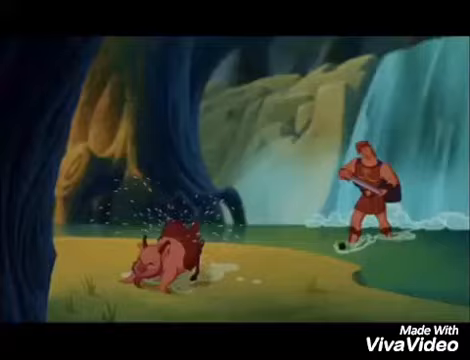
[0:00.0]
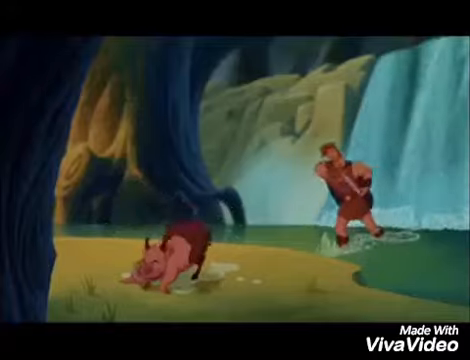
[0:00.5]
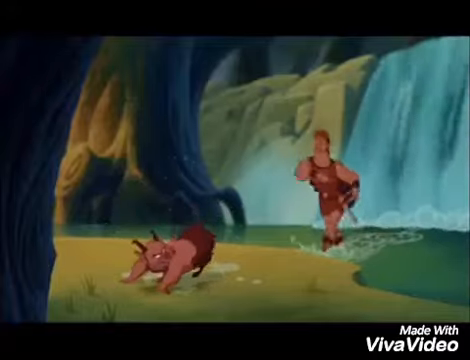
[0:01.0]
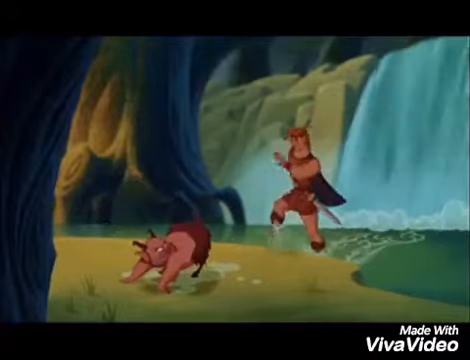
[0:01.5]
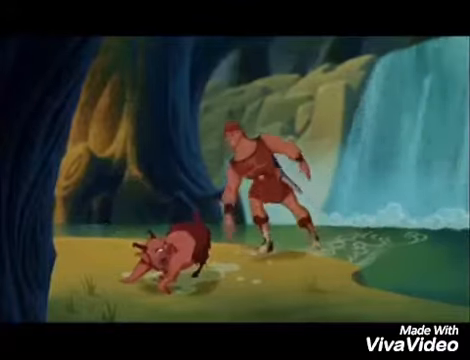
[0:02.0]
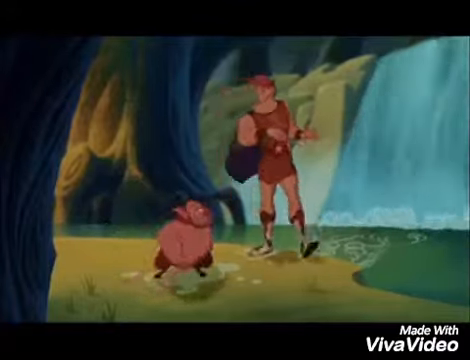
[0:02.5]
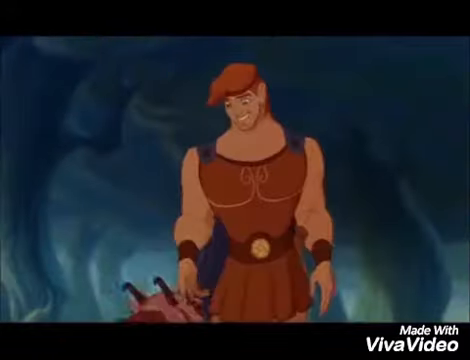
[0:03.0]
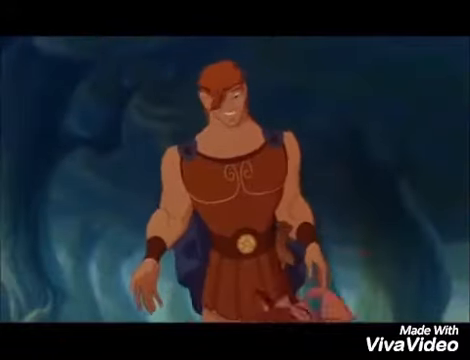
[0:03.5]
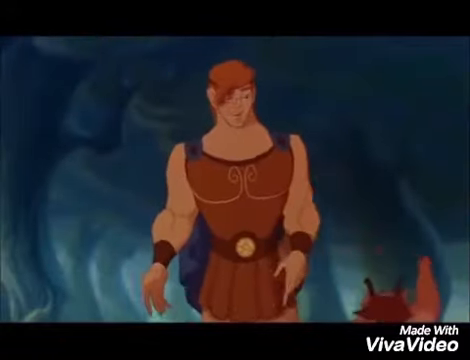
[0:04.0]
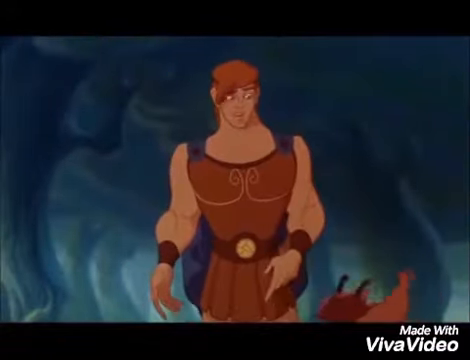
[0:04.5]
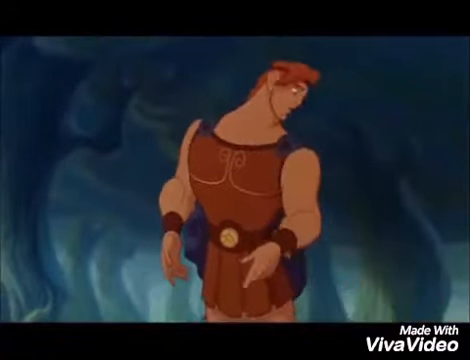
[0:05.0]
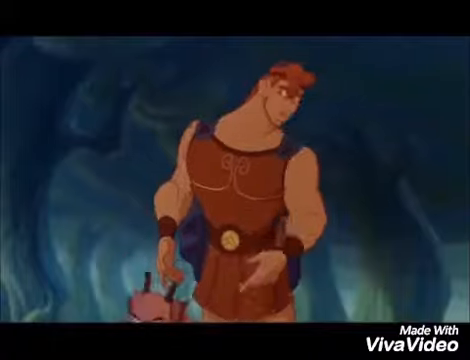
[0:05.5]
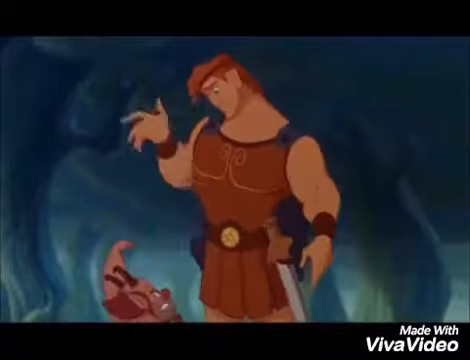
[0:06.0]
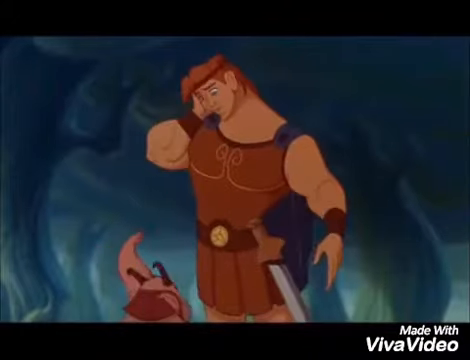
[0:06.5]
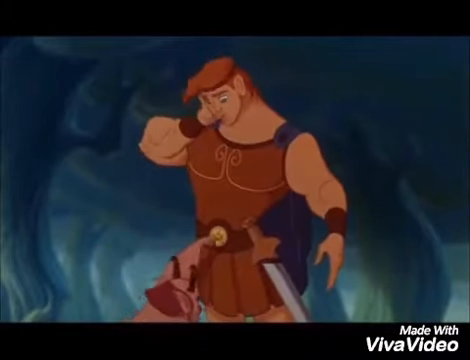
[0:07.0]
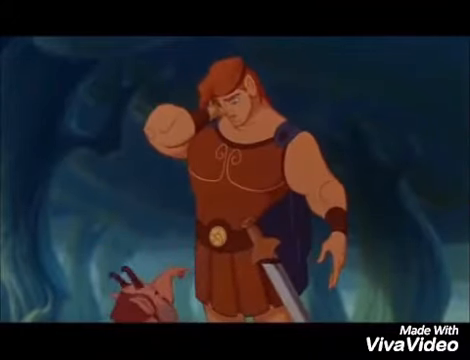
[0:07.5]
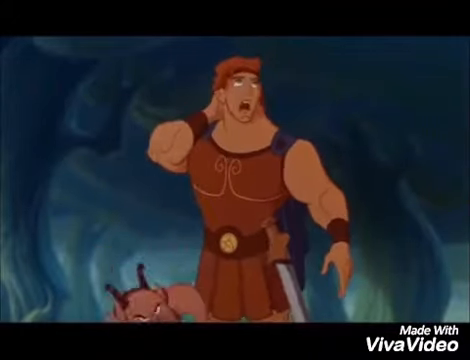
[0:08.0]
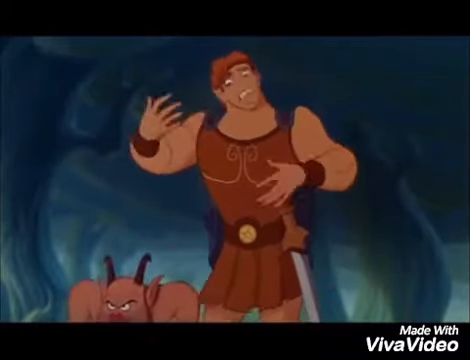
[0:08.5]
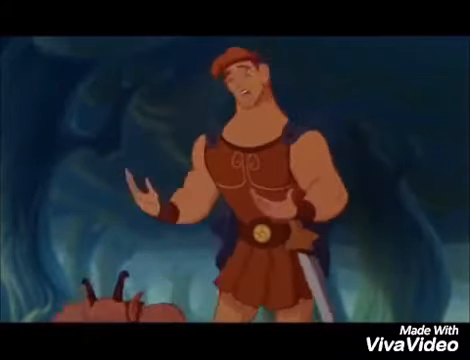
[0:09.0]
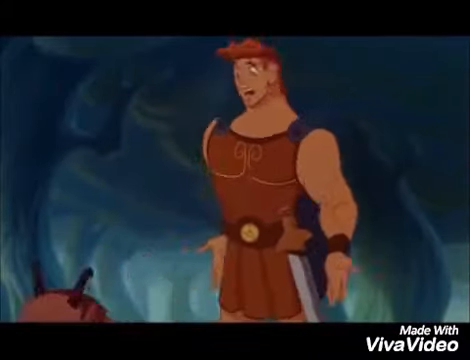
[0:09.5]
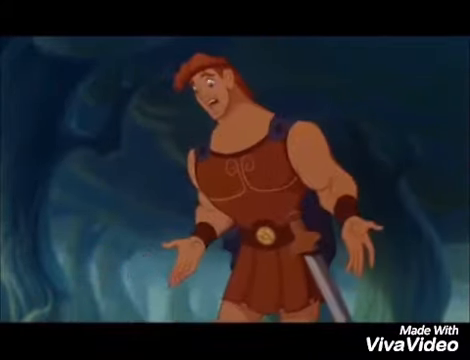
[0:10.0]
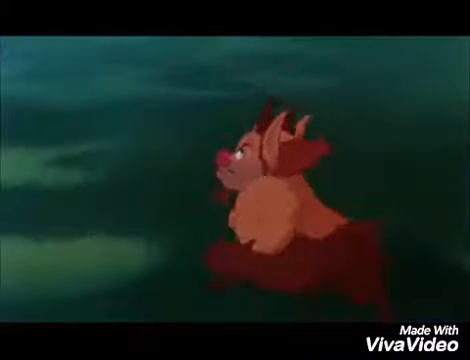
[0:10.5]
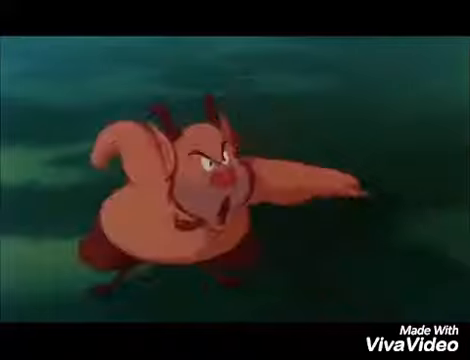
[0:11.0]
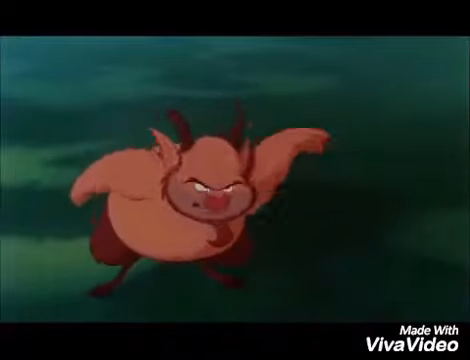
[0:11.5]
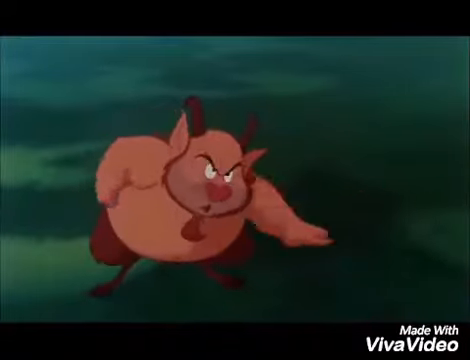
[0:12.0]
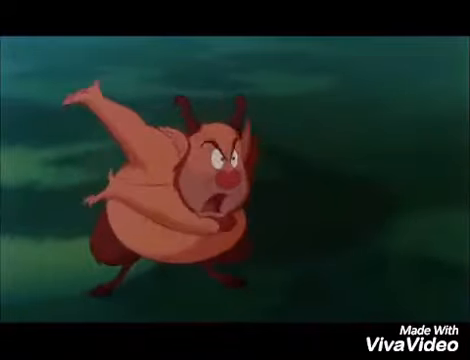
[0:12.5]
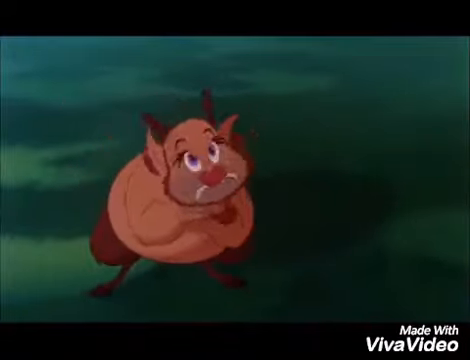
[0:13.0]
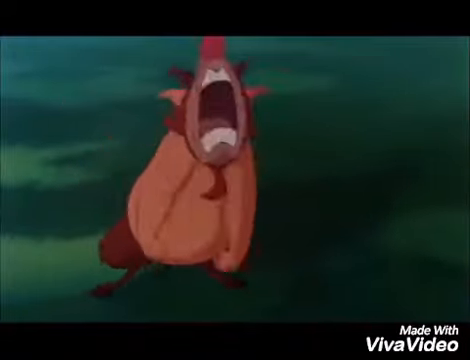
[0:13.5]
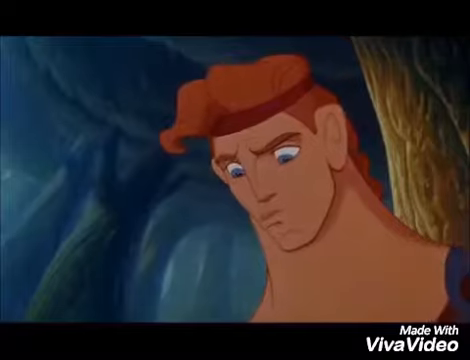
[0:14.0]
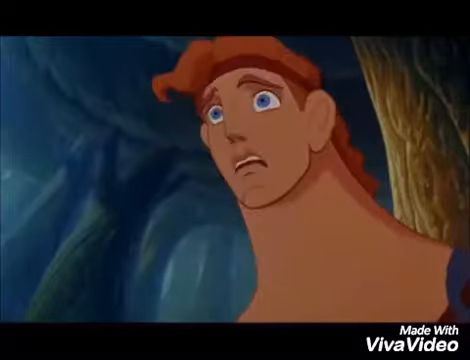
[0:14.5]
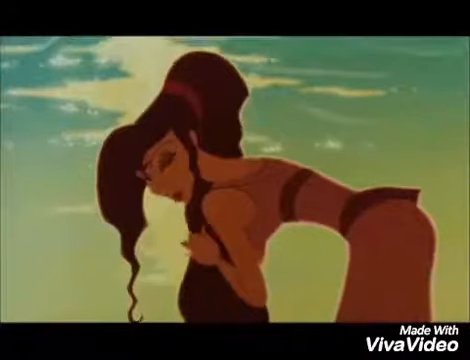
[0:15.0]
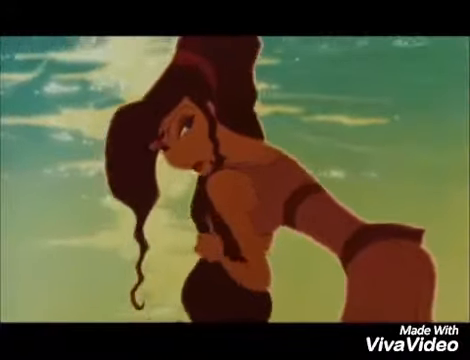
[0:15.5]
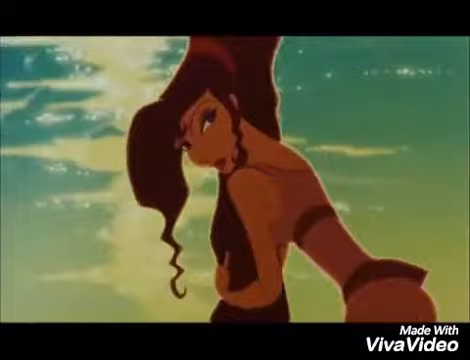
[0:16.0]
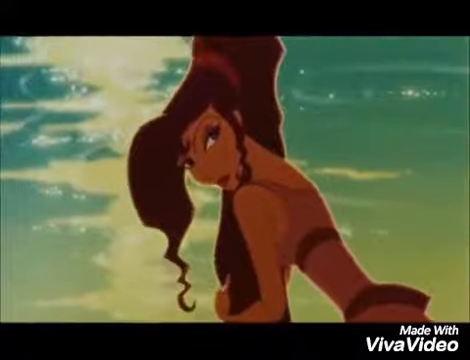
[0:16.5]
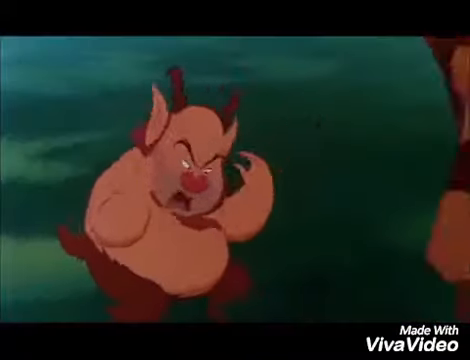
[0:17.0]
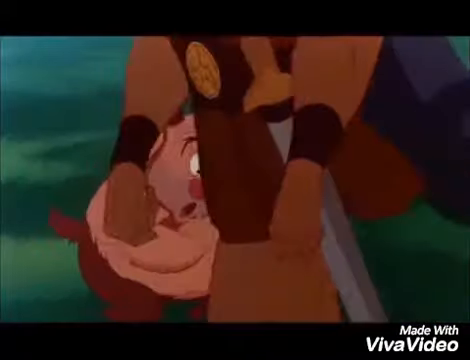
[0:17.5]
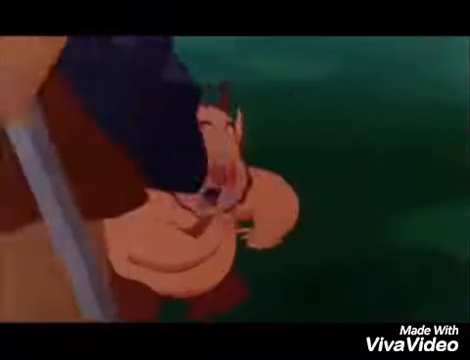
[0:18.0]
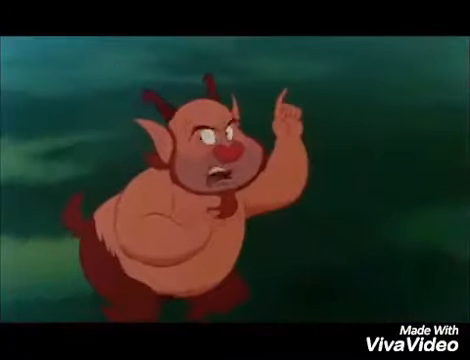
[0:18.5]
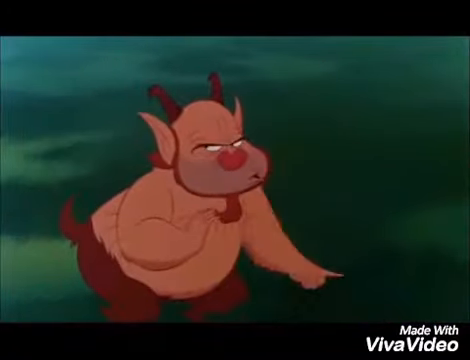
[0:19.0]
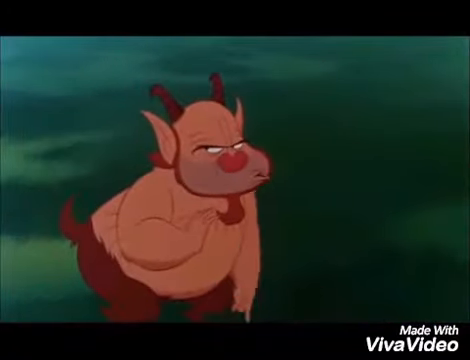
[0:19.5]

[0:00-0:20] A guy emerges from water, like some kind of waterfall. He has a dark brown skin complexion, carries a sword, and wears clothes with a cape at the back. He is arguing with a creature of some sort: a very short creature with two arms, a beard, tiny legs and a very big pot belly. Next, a very beautiful lady with dark brown skin and very long hair is shown washing her hair. The short creature seems to be describing the lady to the guy, or the two are arguing. After that, a white horse or a unicorn appears; it is unclear which, because the shot cuts off.